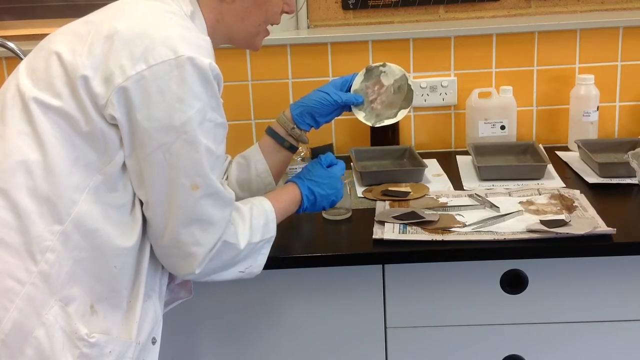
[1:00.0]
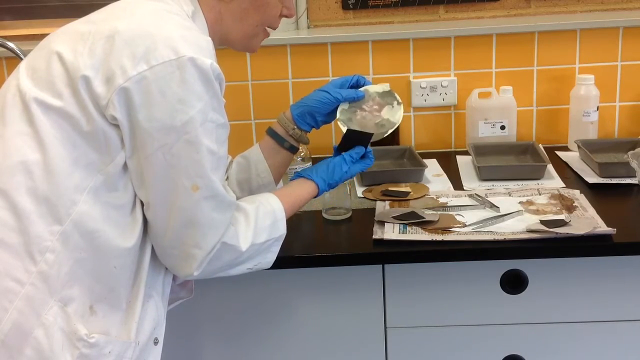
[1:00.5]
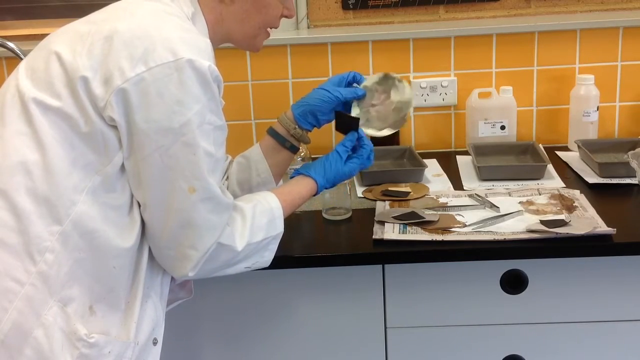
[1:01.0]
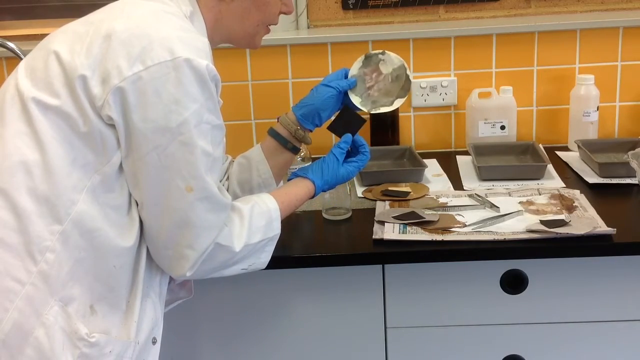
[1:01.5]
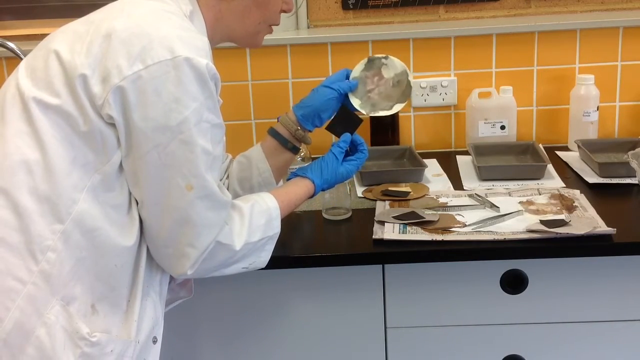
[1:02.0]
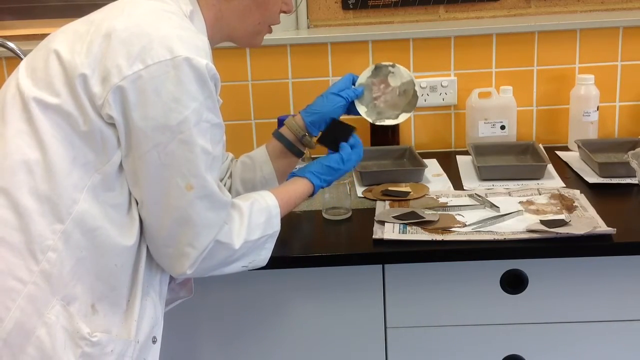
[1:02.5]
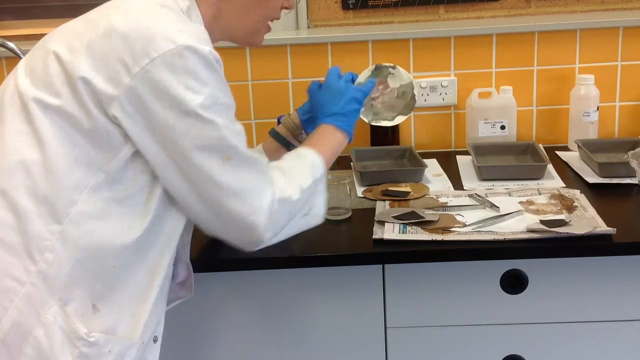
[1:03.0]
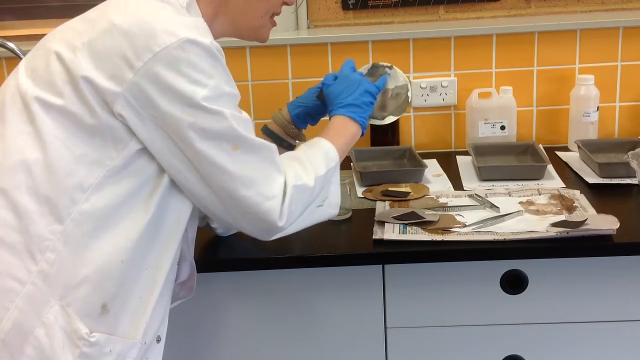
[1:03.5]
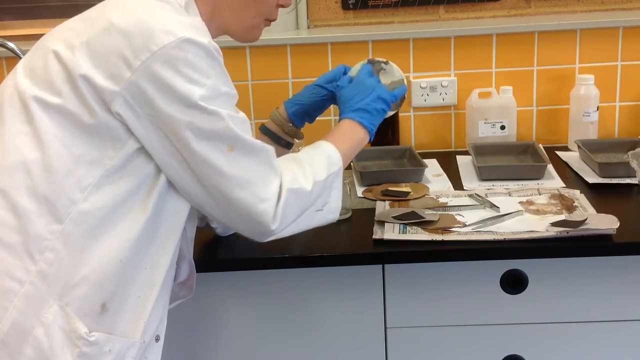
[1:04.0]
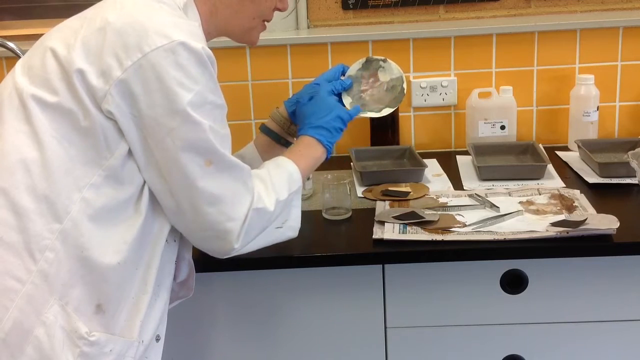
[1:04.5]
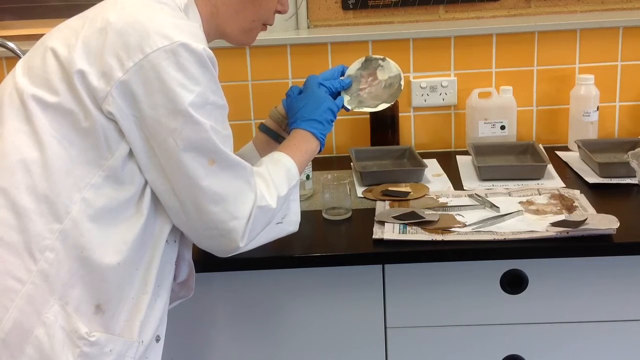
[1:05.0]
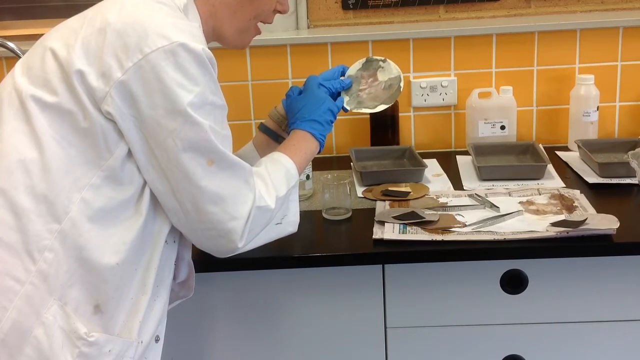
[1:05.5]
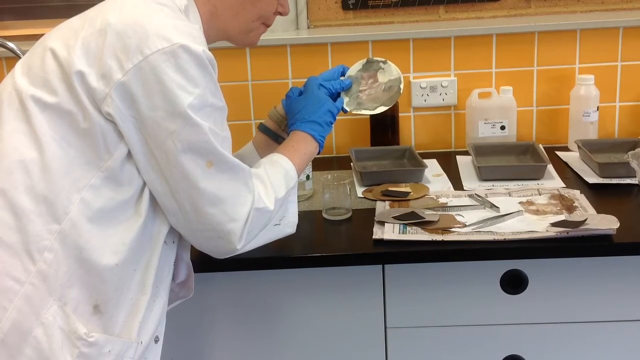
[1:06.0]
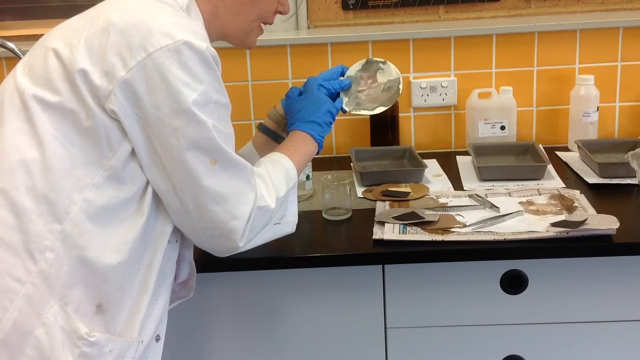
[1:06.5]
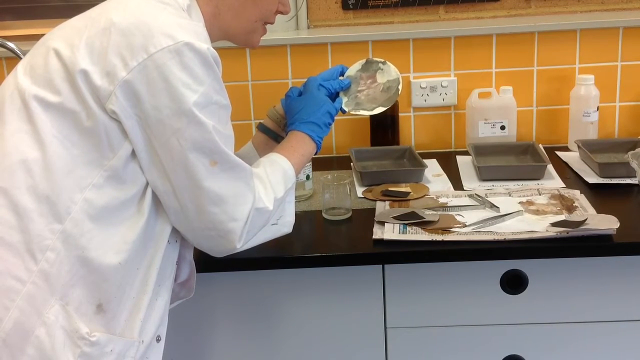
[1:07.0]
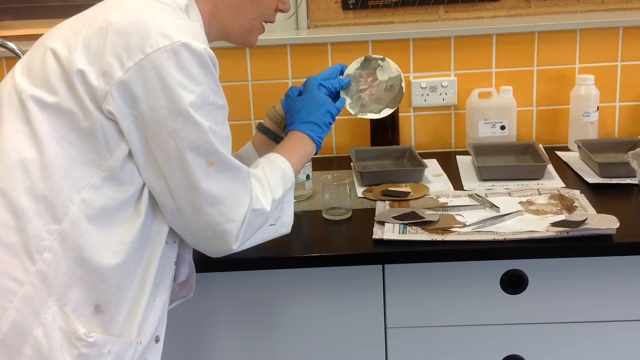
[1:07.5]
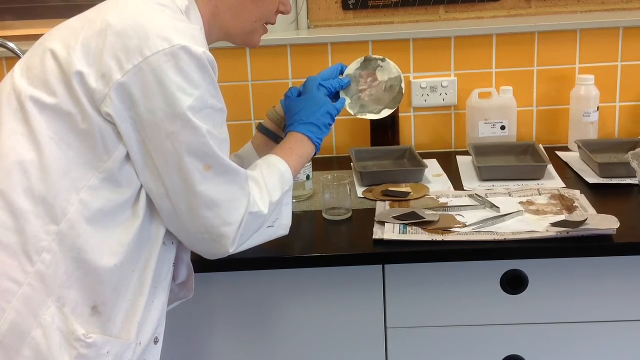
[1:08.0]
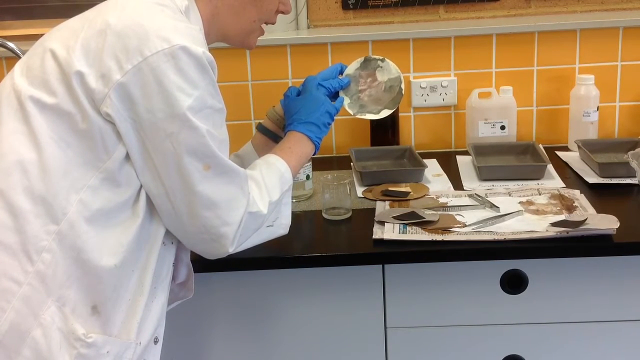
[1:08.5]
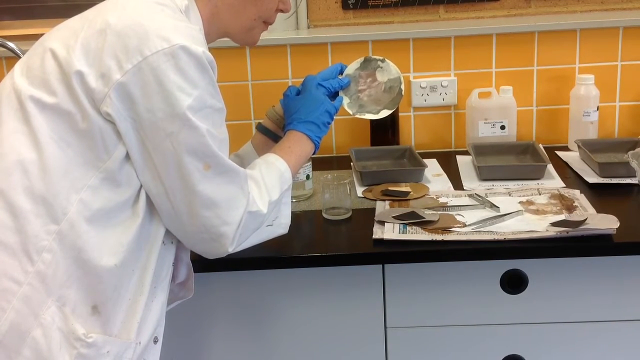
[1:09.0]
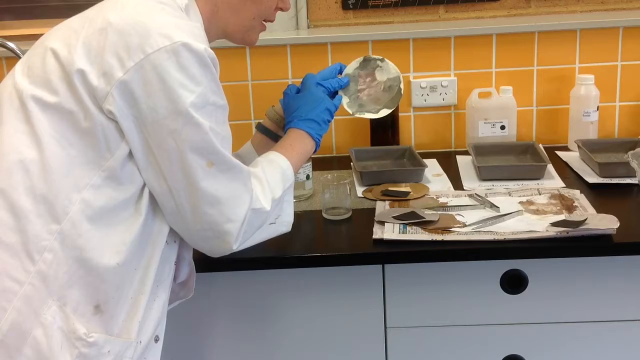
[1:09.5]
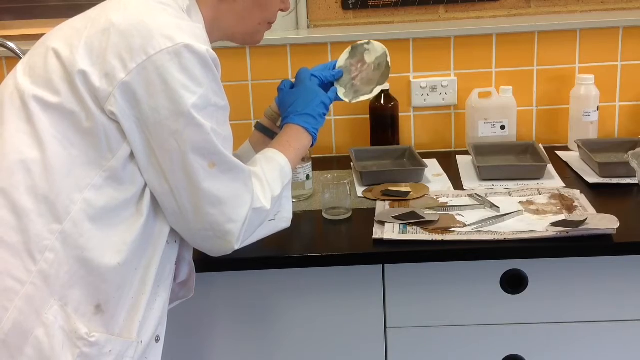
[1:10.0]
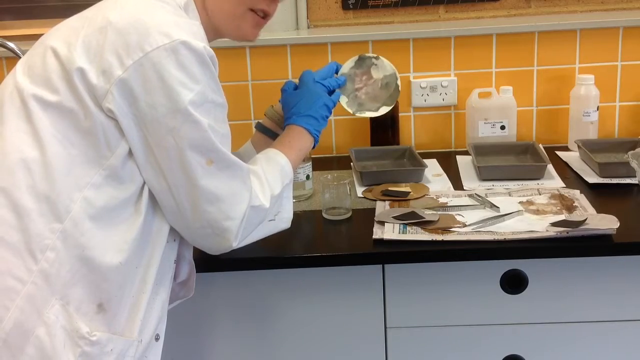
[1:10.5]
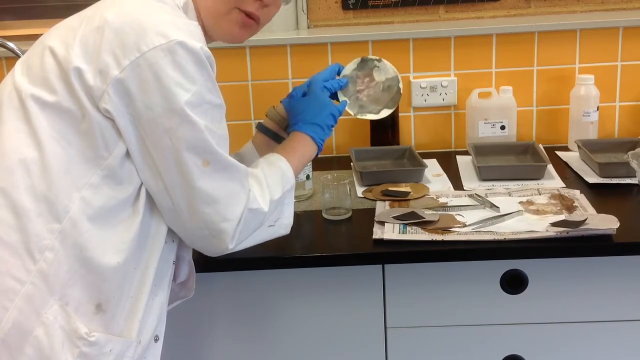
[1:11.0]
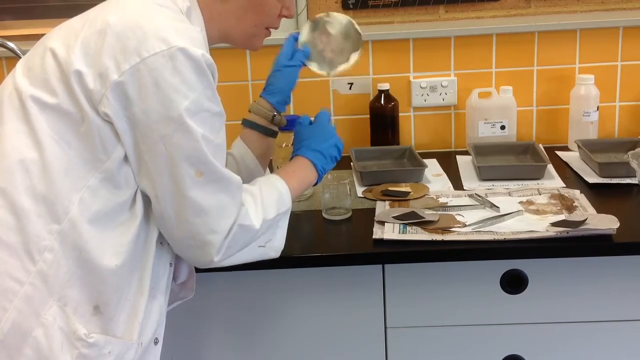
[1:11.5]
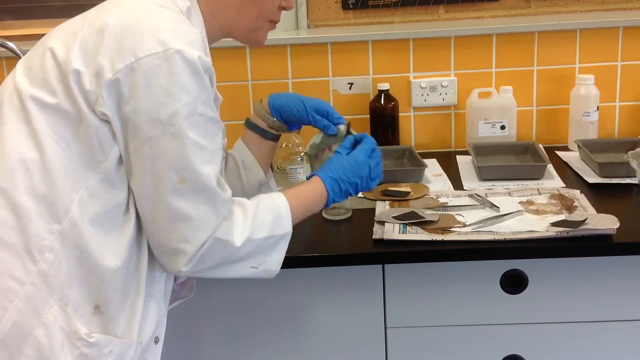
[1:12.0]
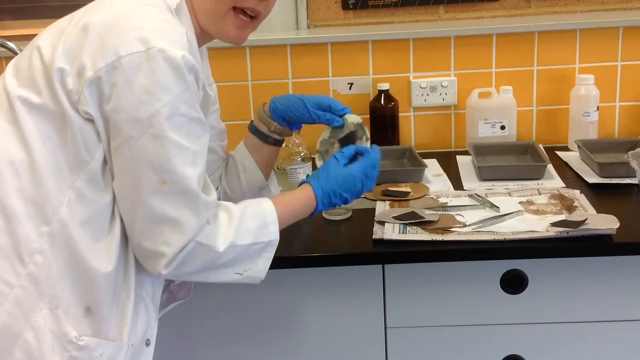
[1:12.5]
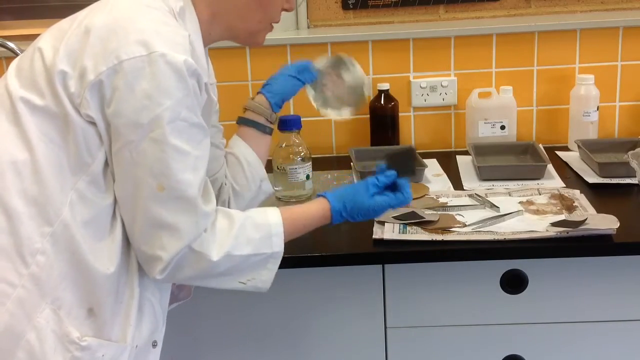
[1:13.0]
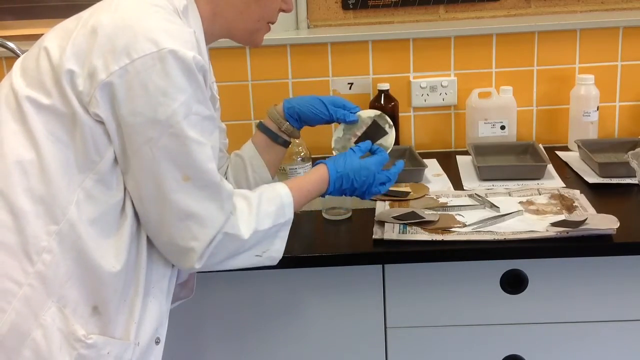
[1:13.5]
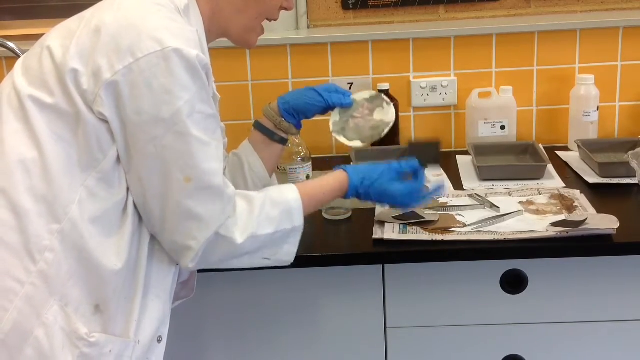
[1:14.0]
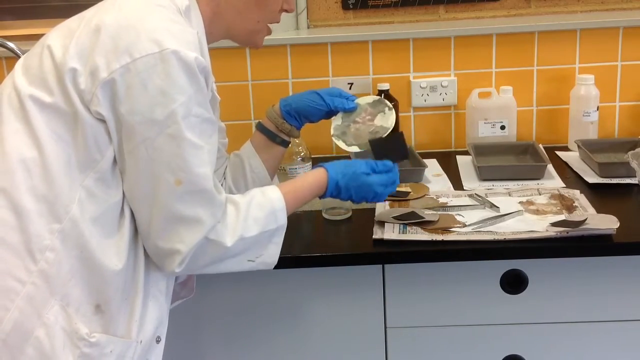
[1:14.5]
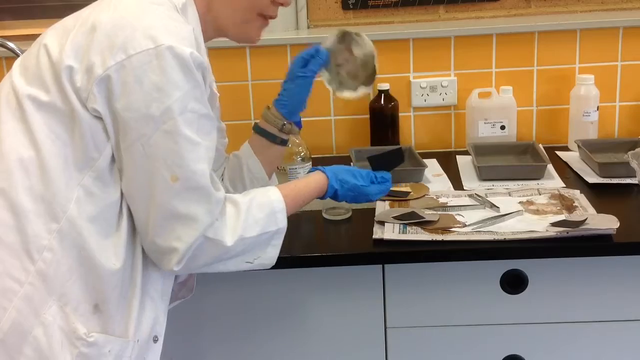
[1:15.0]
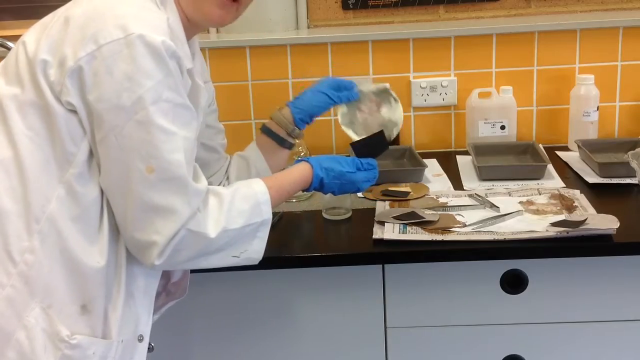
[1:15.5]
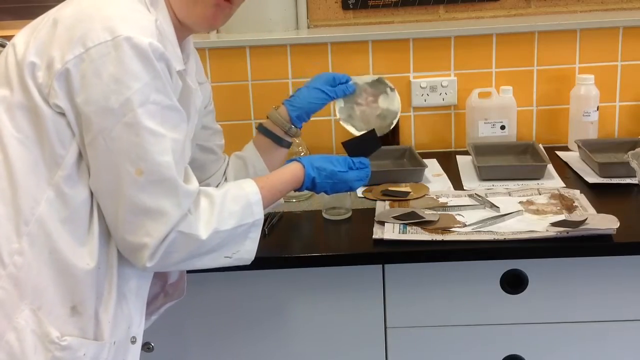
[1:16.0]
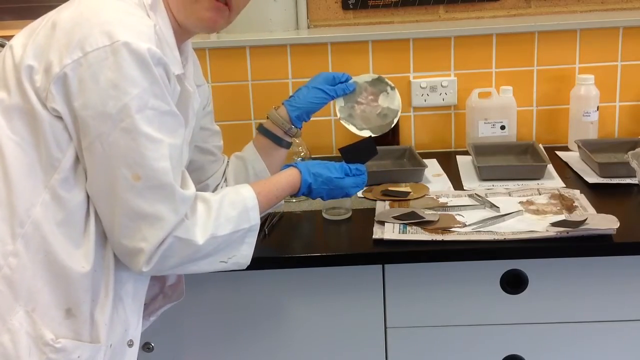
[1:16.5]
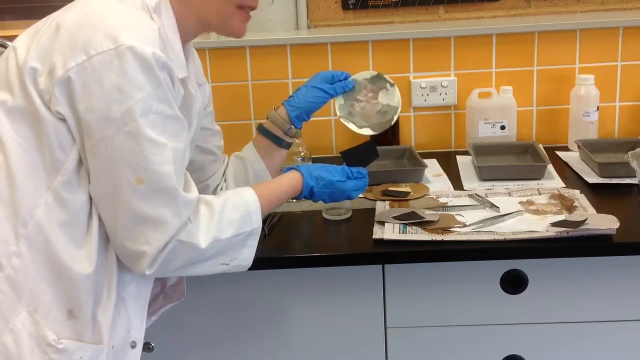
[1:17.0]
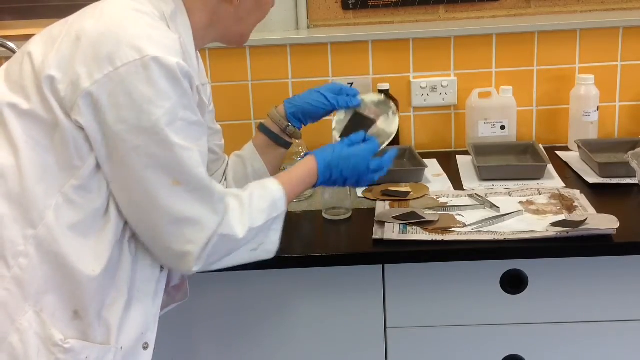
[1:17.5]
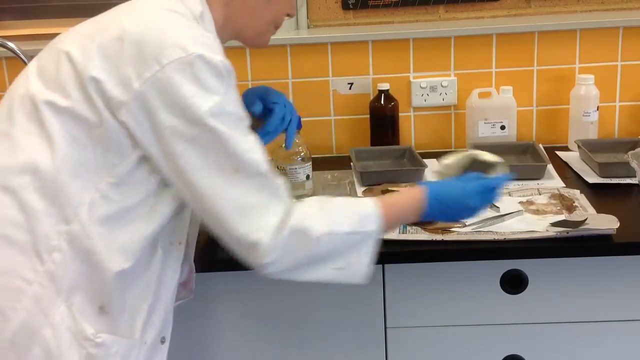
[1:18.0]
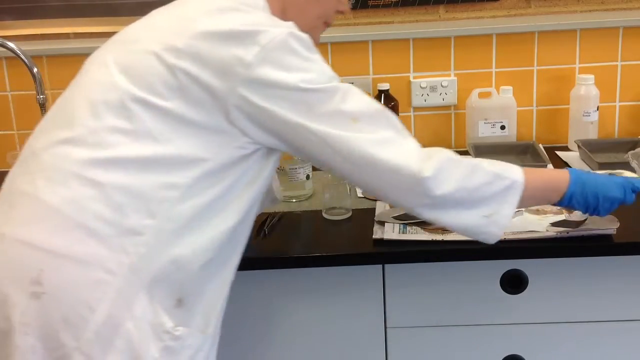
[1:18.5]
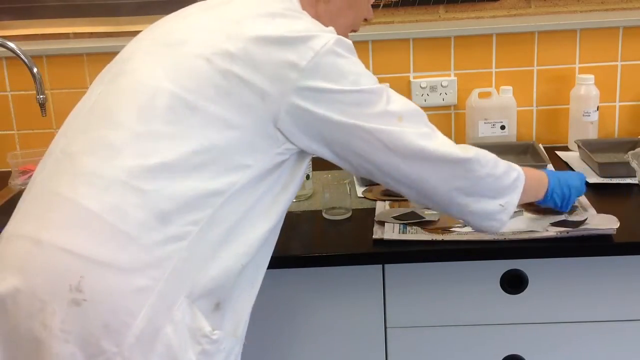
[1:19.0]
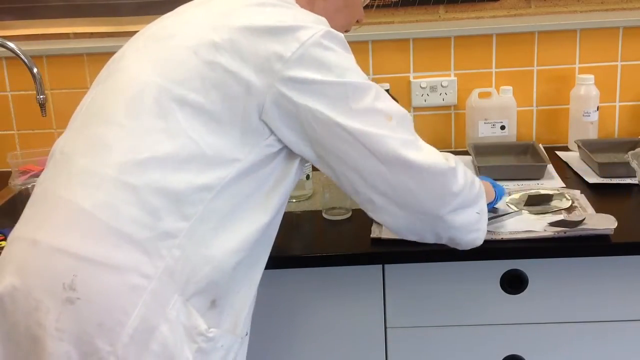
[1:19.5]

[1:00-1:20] A person on the left side of the screen wears a white lab coat and blue rubber gloves. She holds a brown circular object in her left hand that looks like it has paint on it, with her left elbow resting on the countertop, and holds a black square object in her right hand. She points to the paint with the pinky finger of her right hand. Her lips are visible talking at the top of the screen, along with the right side of her face but not the top of her head. She turns her head to the screen and keeps talking, shaking the circular object up and down in her left hand. She switches the objects to her right hand and sets them down on a piece of newspaper on the countertop. The wall in the background is orange tile with white grout.